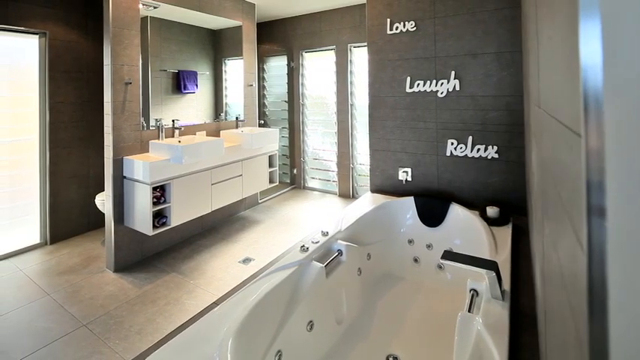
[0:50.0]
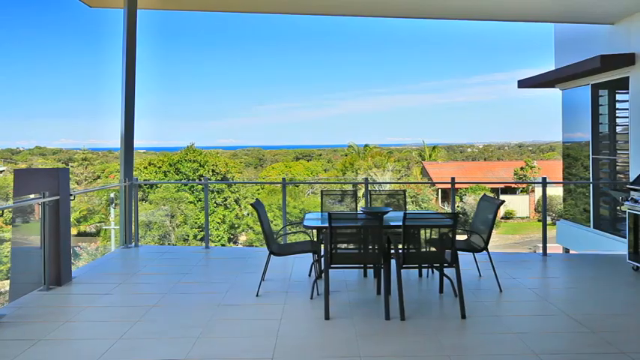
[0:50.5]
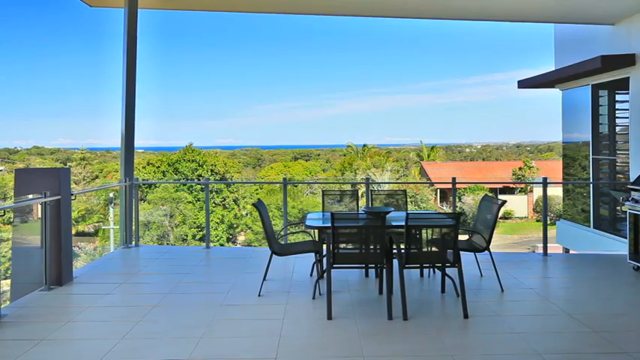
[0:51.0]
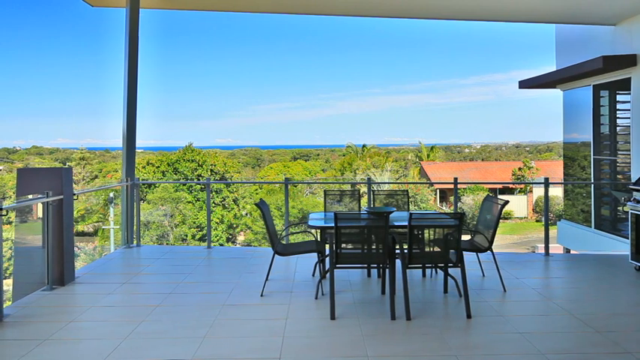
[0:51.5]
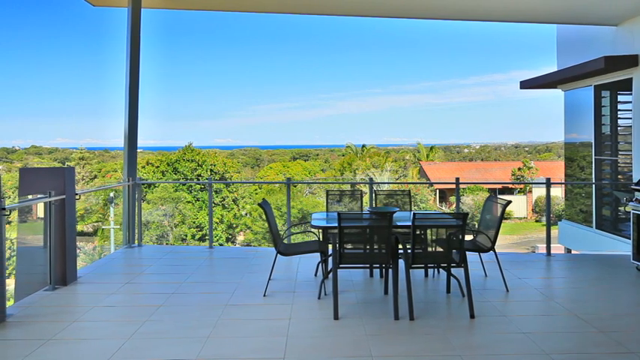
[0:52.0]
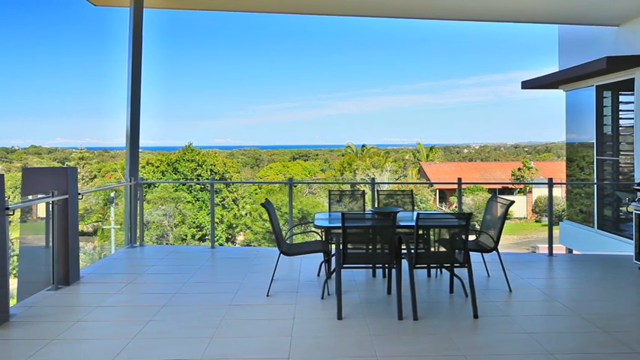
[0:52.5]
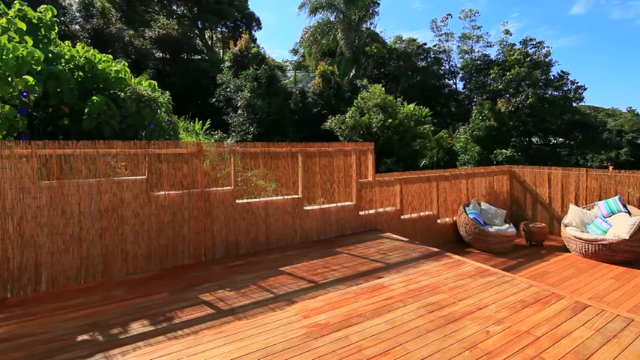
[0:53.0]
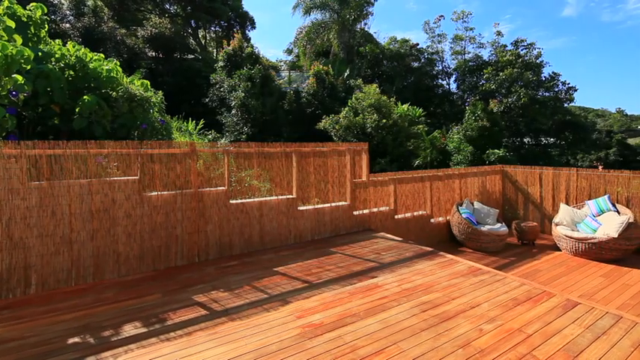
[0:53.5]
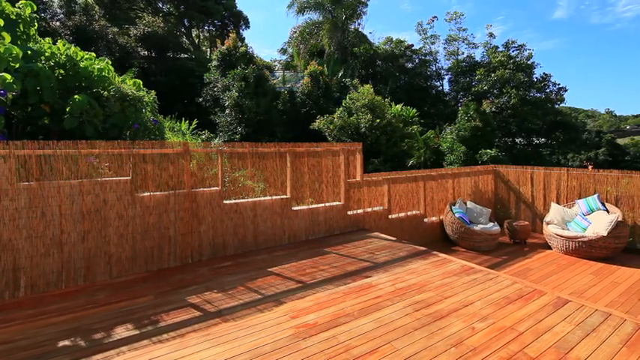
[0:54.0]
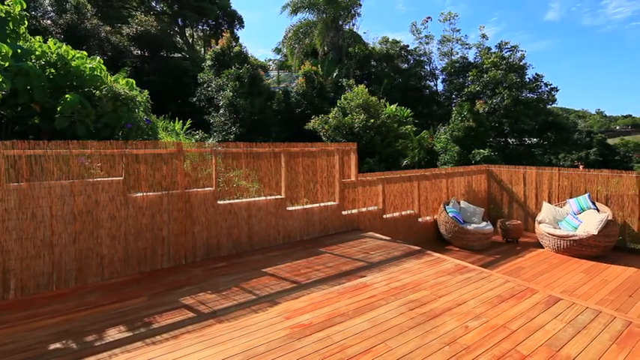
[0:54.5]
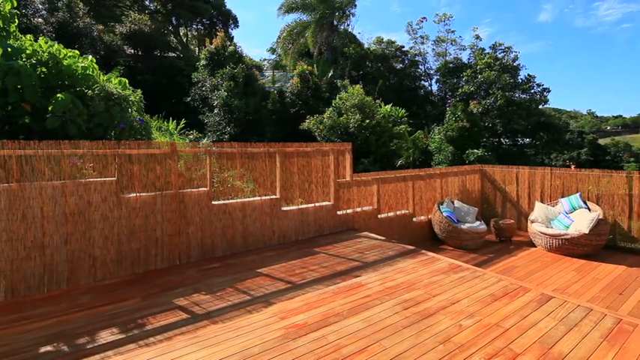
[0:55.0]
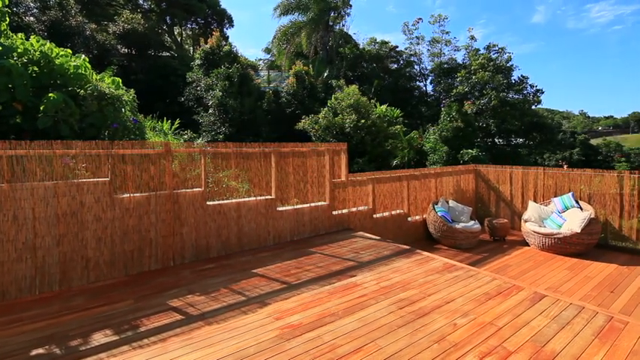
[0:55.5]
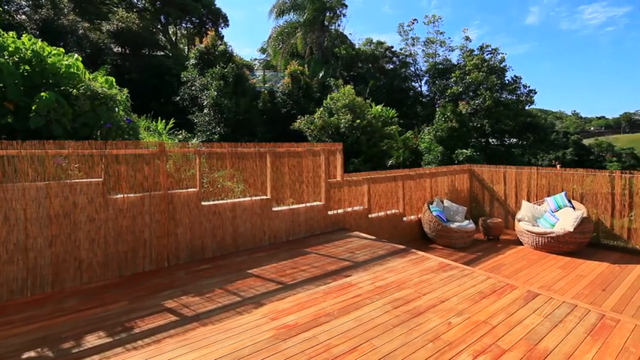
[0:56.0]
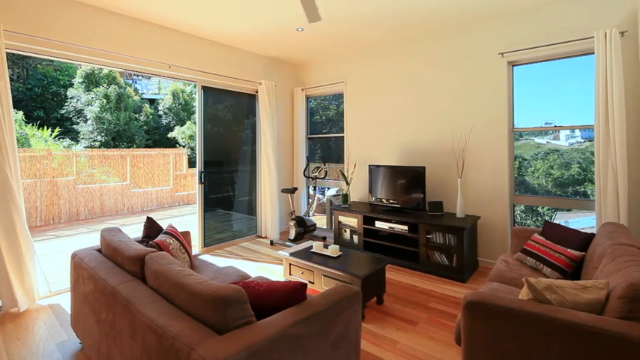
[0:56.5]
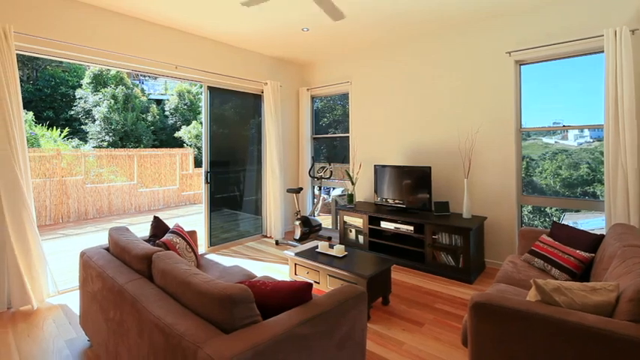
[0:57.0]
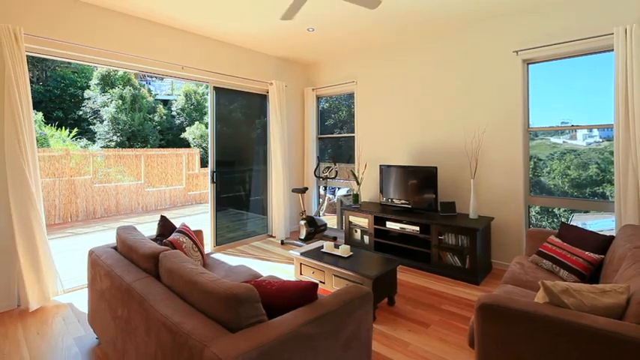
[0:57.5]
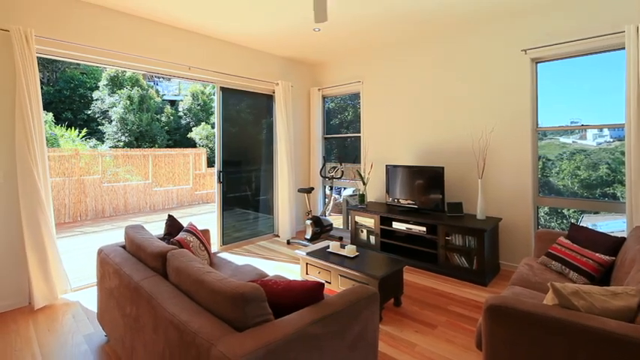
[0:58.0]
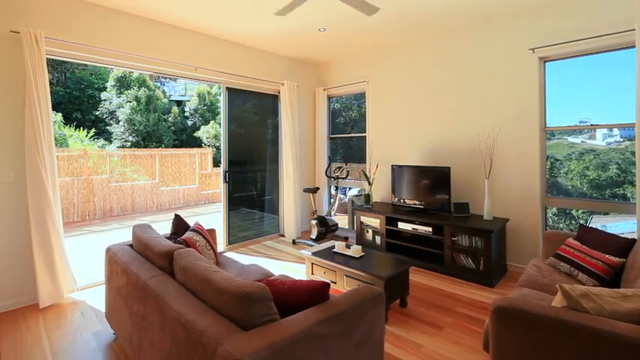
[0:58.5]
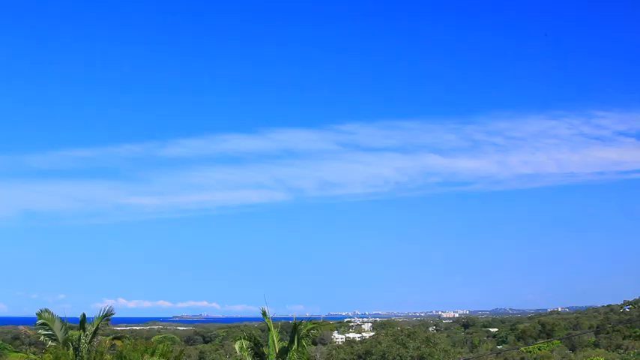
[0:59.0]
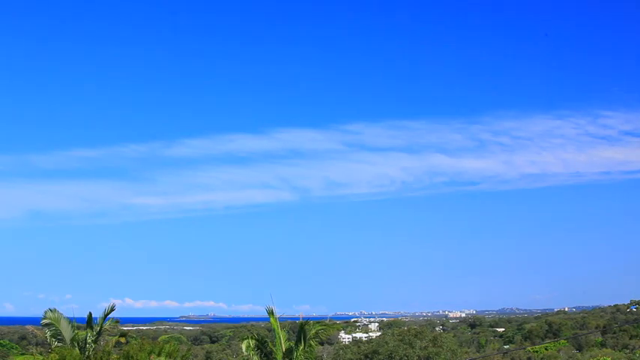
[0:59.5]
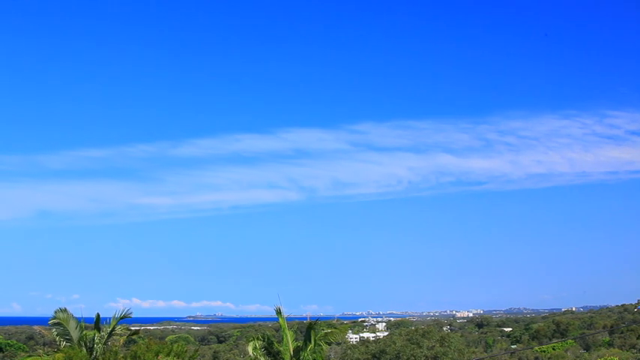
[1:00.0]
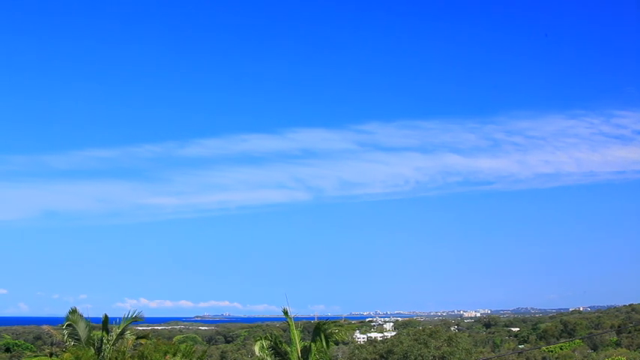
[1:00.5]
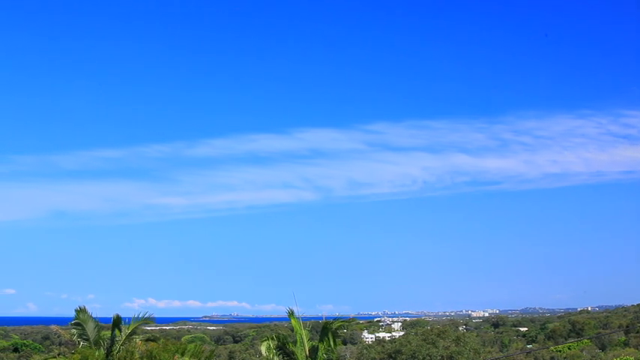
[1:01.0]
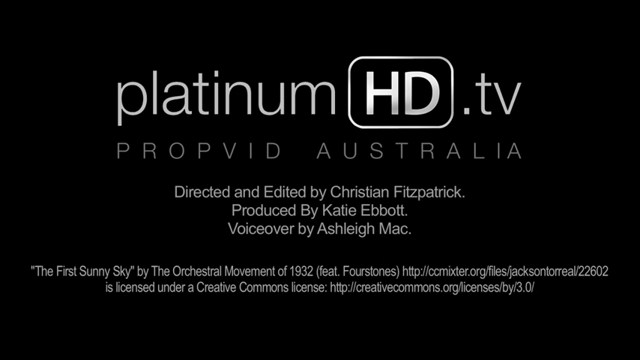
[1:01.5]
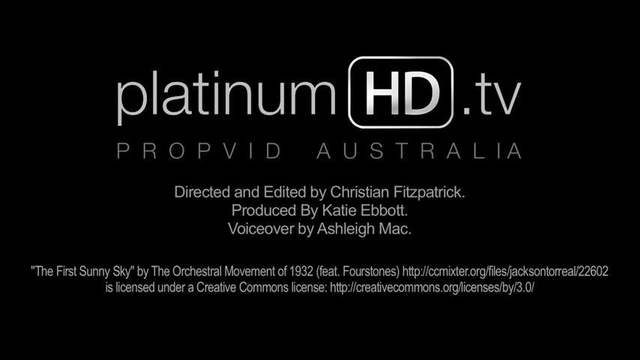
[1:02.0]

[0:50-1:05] A closer view shows the patio with the black table and black chairs, along with the rail protecting the porch. Next is a very wooden area that possibly is the backyard; little of it is visible, but it looks like a very gated-off wooden area. Then comes footage of what seems to be an entertainment room, with a small TV, a brown couch, and a TV stand at the front. Afterwards there is footage of somebody taking video footage of the sky, which has really thin, long clouds. At the end, a logo for "PlatinumHD.tv" appears.